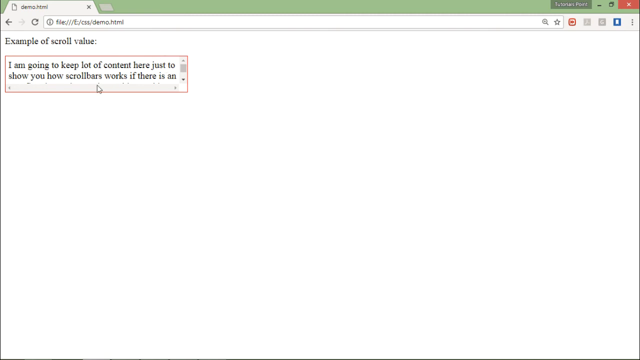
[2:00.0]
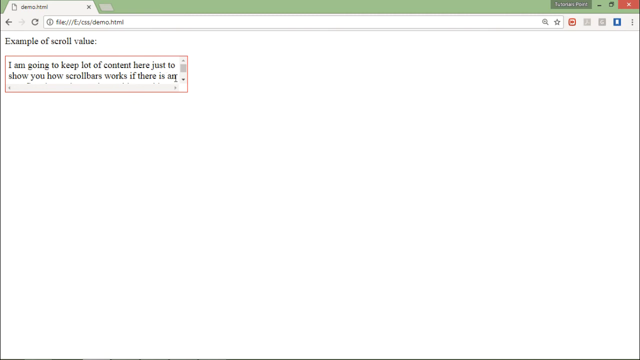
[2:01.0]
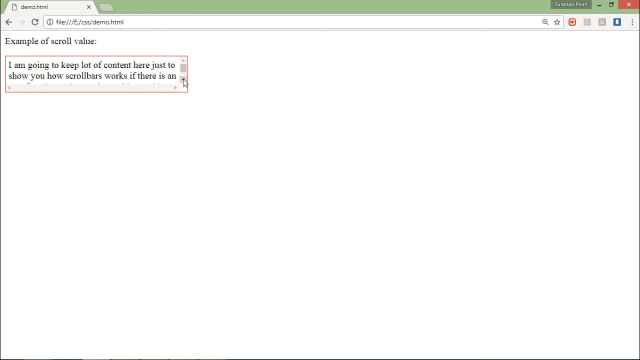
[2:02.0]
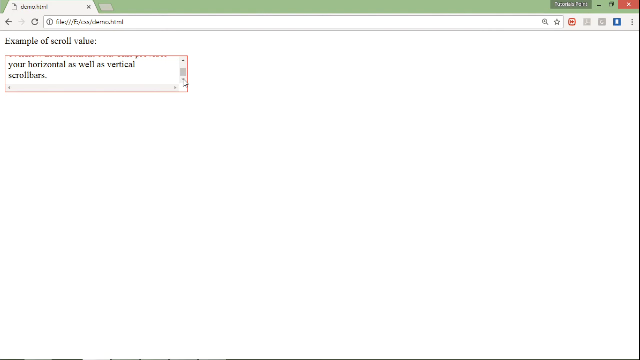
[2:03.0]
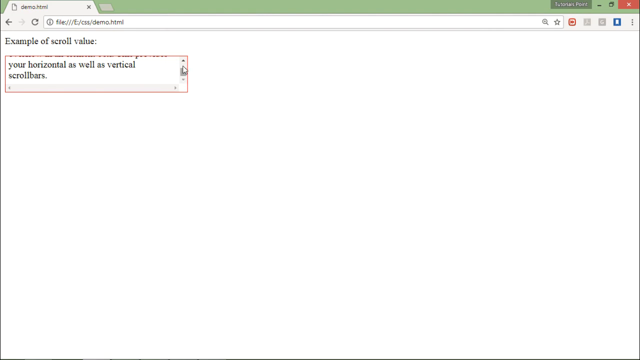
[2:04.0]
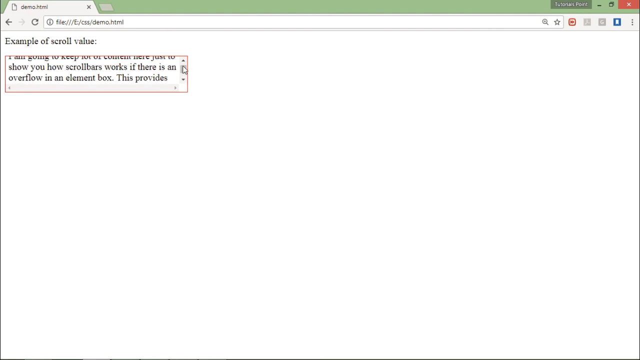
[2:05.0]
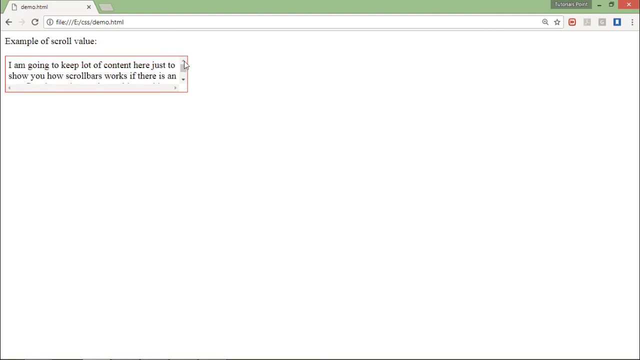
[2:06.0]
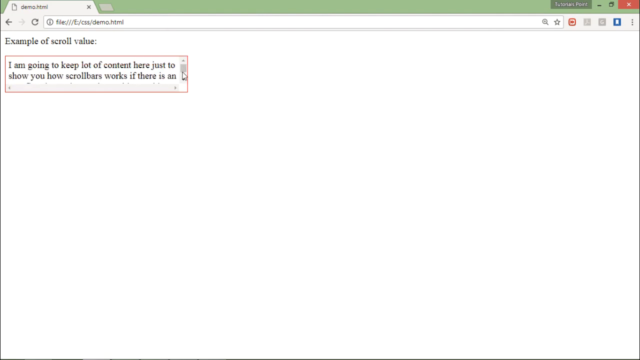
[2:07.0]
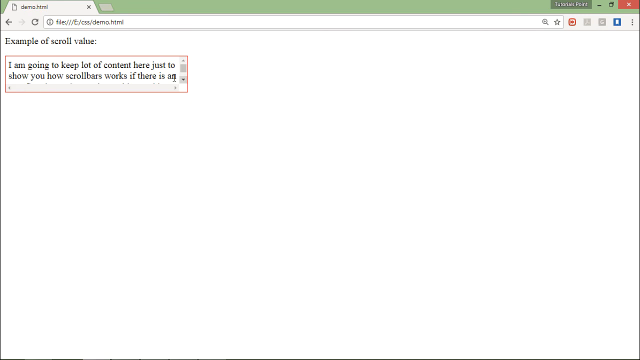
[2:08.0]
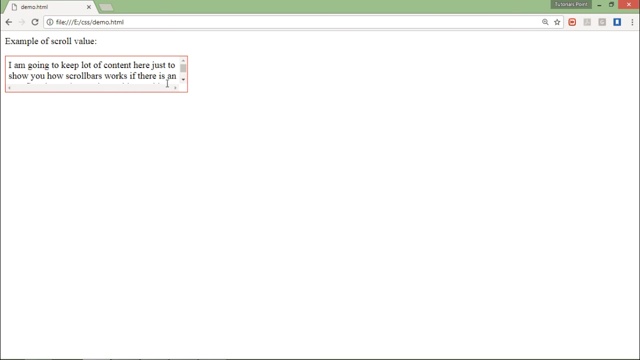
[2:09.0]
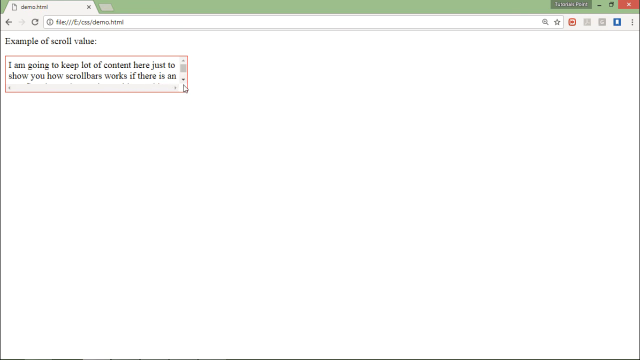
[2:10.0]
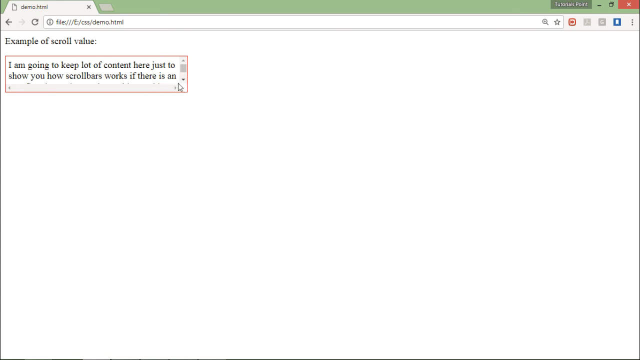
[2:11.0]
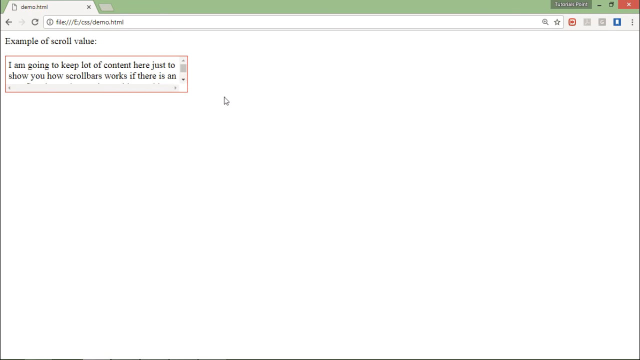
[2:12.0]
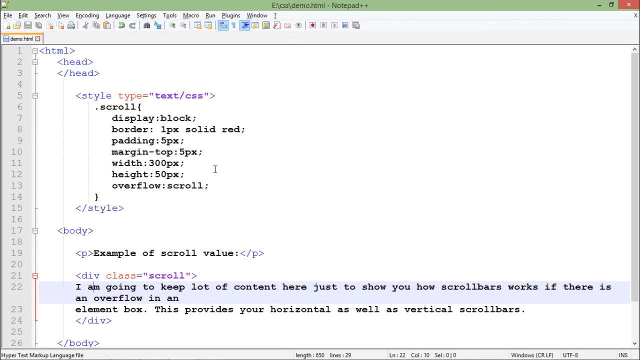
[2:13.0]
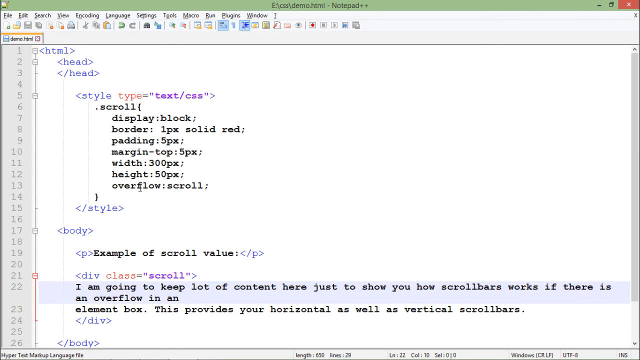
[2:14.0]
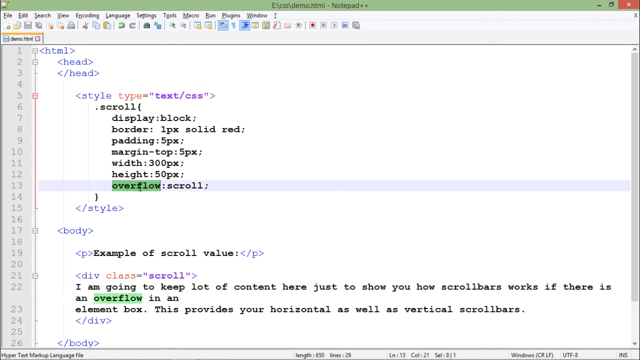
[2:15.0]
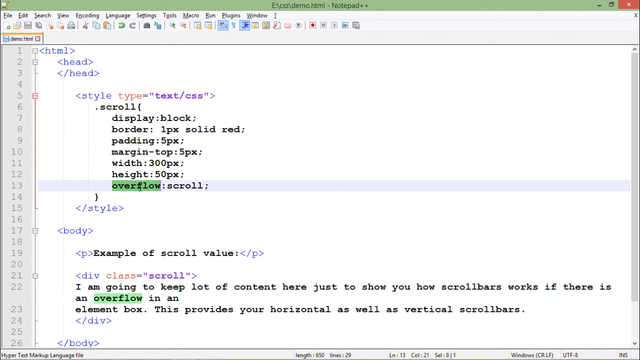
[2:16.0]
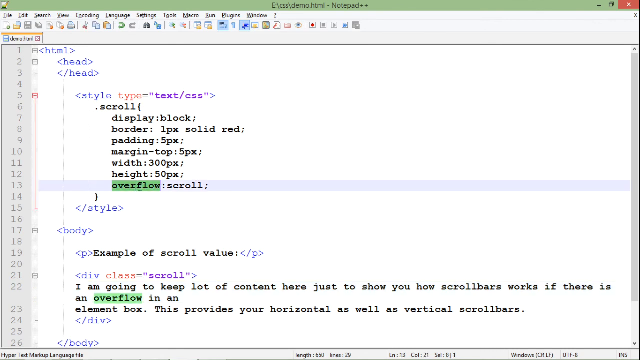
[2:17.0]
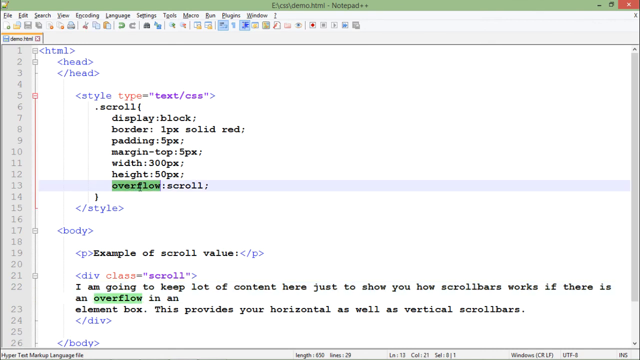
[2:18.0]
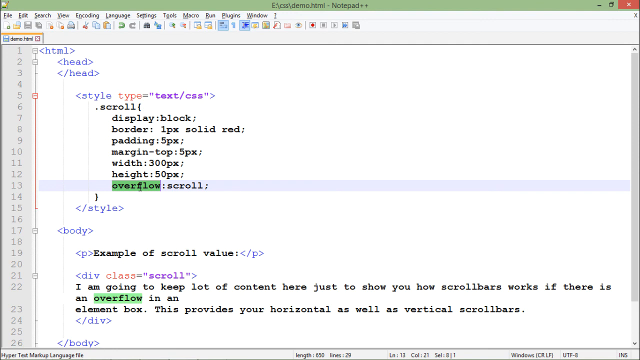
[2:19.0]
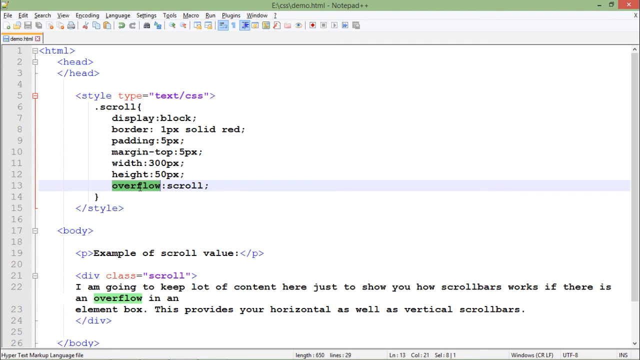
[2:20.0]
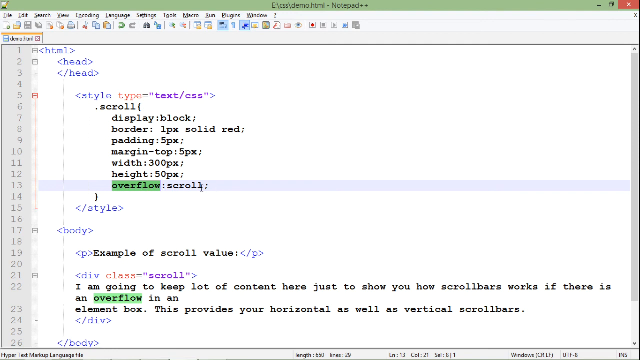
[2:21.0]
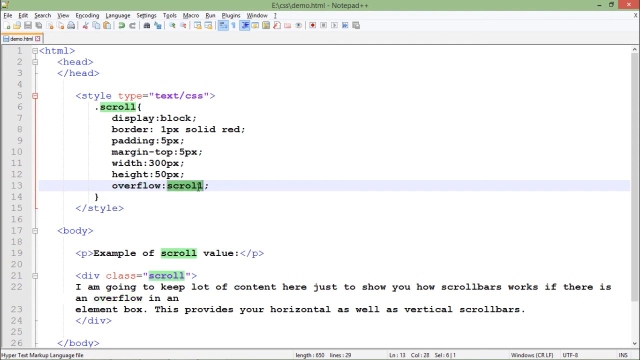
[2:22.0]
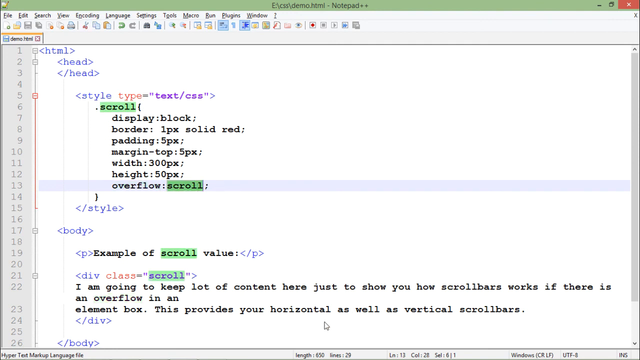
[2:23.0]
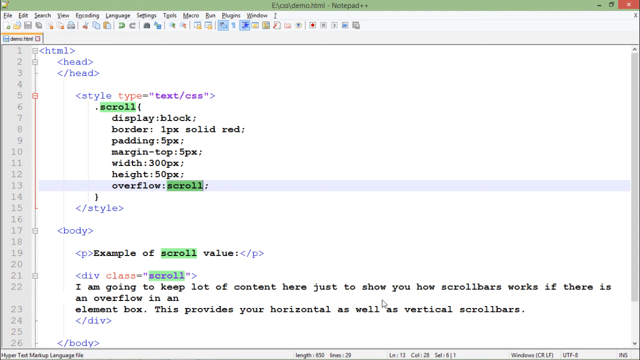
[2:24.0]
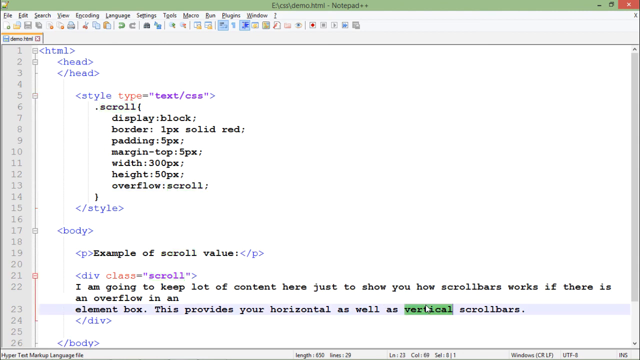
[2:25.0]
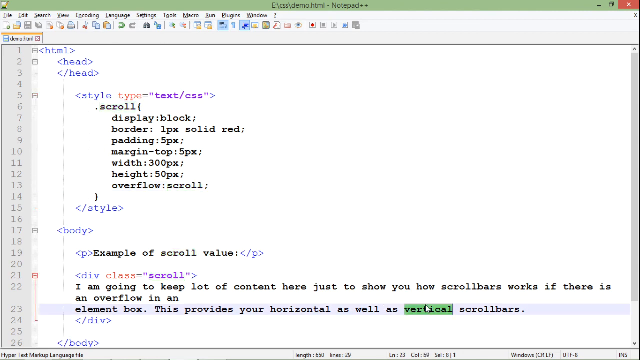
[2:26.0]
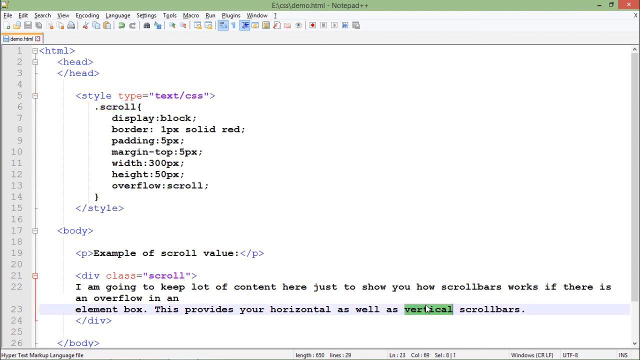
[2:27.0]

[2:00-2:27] A browser is open to a local computer file titled demo.html. The screen has a white background, and in the top left corner black text says "example of scroll value:". Underneath is a small, long rectangular box with a scroll bar on the right, containing black text that says "I am going to keep lot of content here just to show you how scroll bars works if there is an". The user scrolls down to reveal the rest of the text: "overflow in an element box. This provides your horizontal as well as vertical scroll bars." They then scroll back to the top. Next they return to the Notepad++ document and click on the word overflow on line 13, which gets highlighted with a green box; the word overflow on line 22 also has a green highlight box. The cursor then clicks the word scroll on line 13, which is highlighted with a green box along with scroll on lines 6, 19 and 21. Finally, the cursor clicks on the word vertical on line 23.